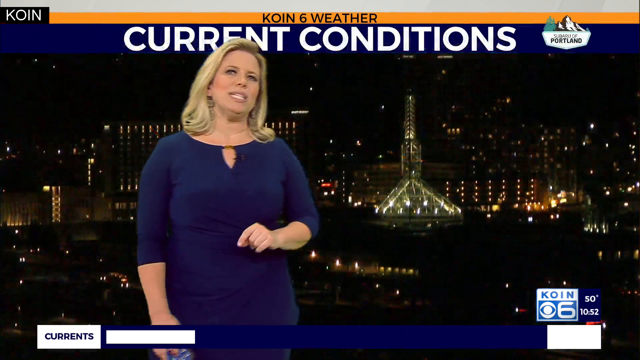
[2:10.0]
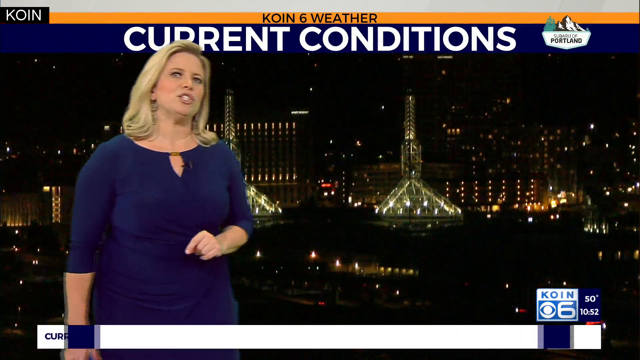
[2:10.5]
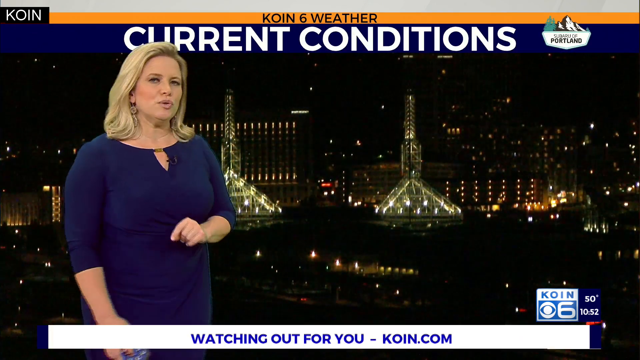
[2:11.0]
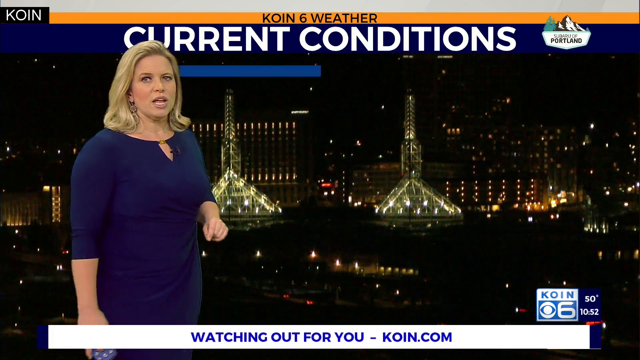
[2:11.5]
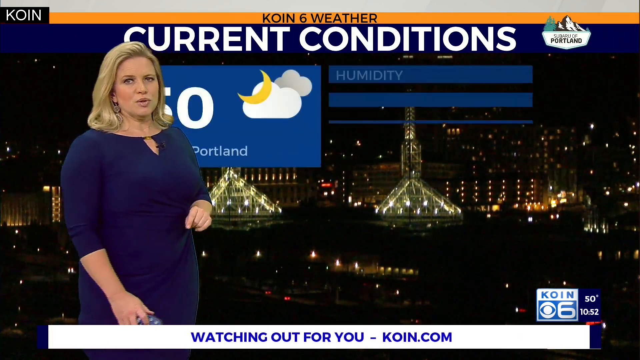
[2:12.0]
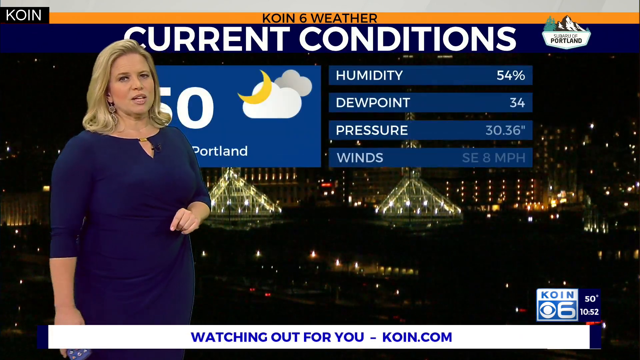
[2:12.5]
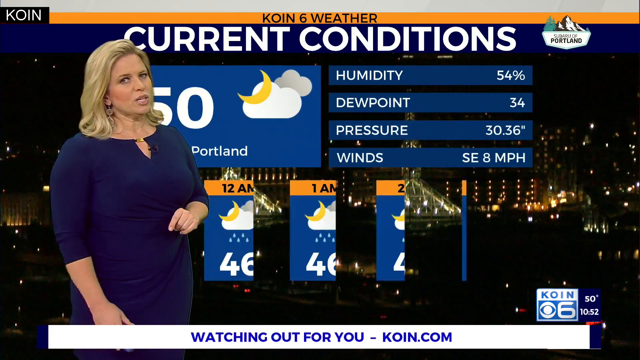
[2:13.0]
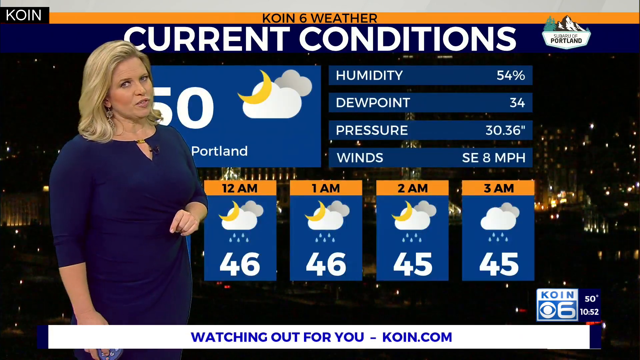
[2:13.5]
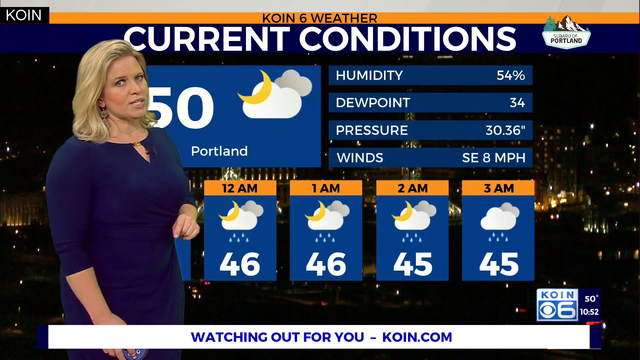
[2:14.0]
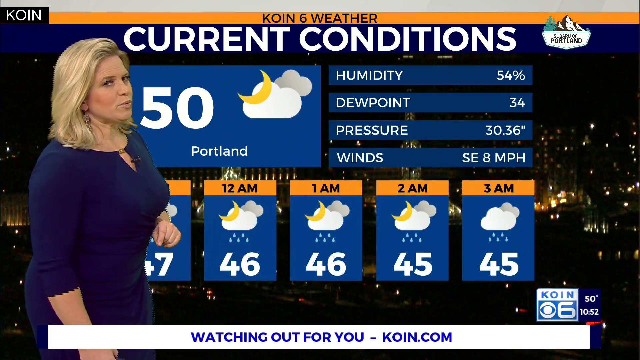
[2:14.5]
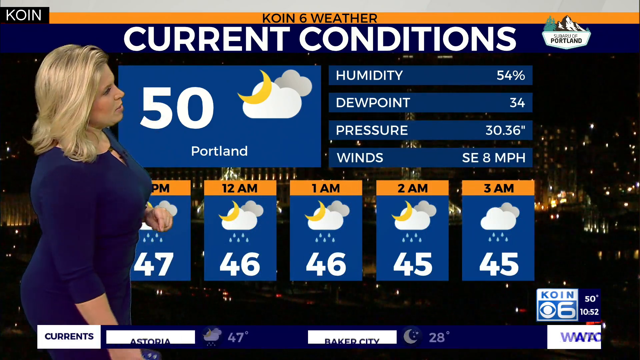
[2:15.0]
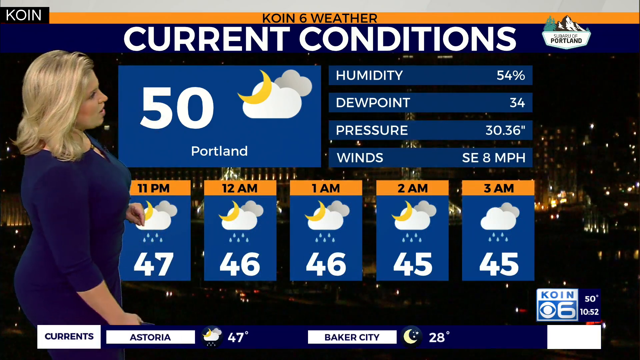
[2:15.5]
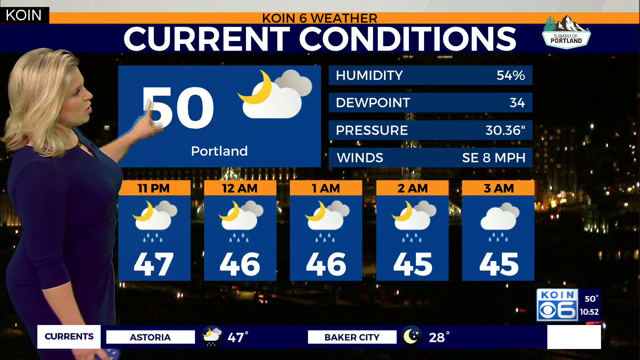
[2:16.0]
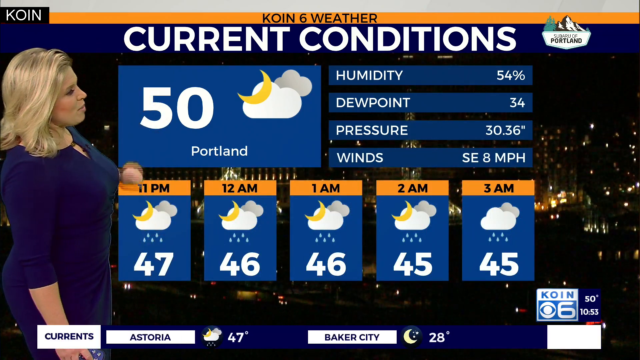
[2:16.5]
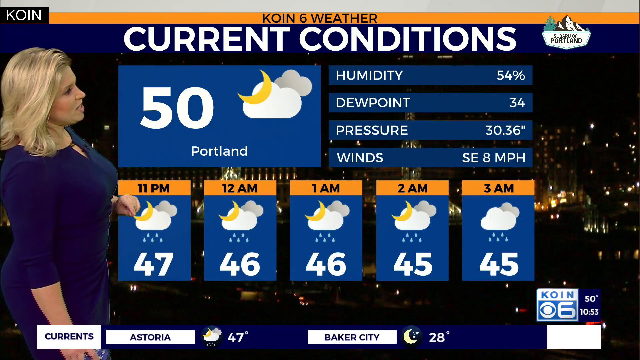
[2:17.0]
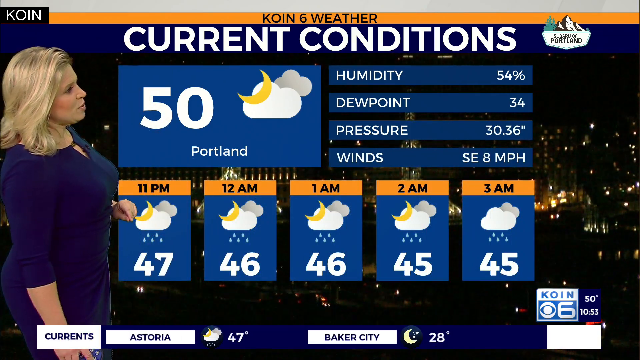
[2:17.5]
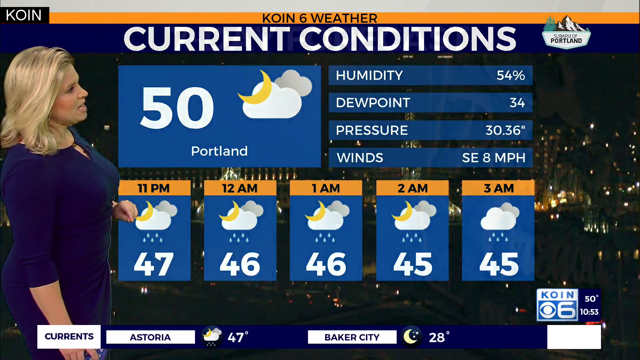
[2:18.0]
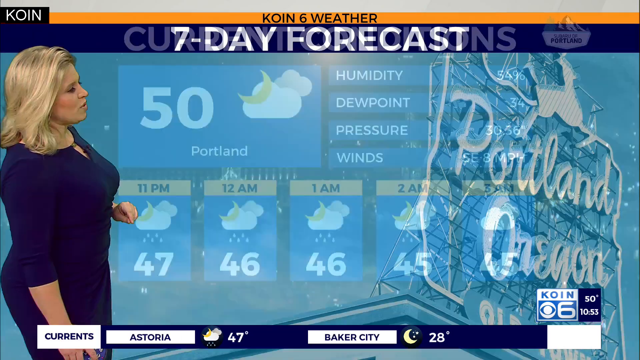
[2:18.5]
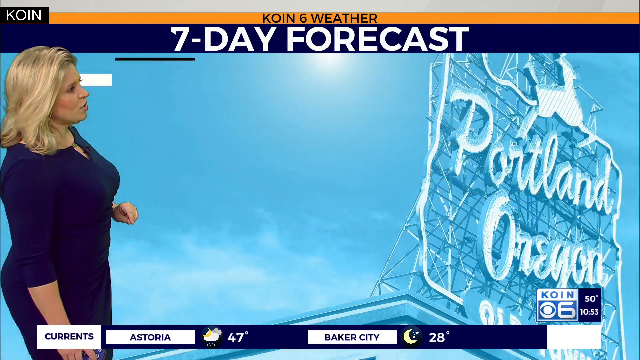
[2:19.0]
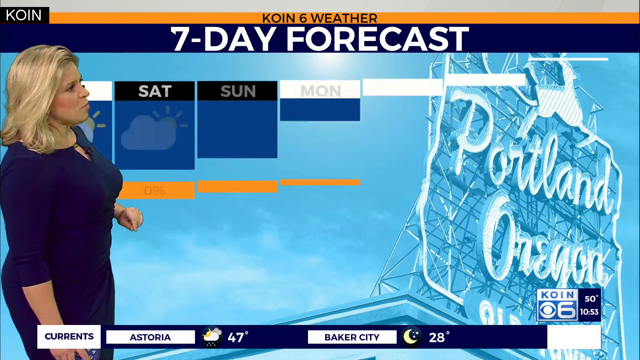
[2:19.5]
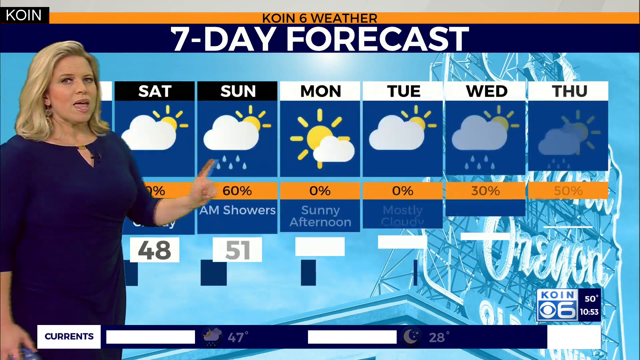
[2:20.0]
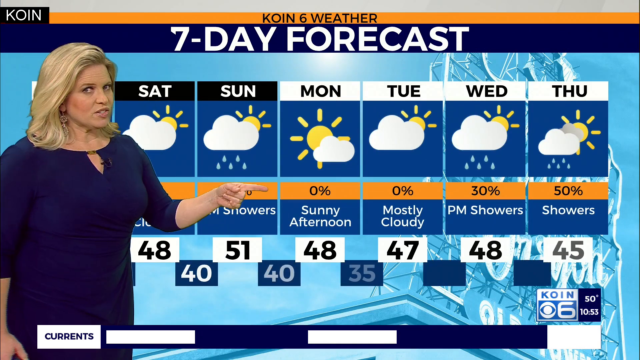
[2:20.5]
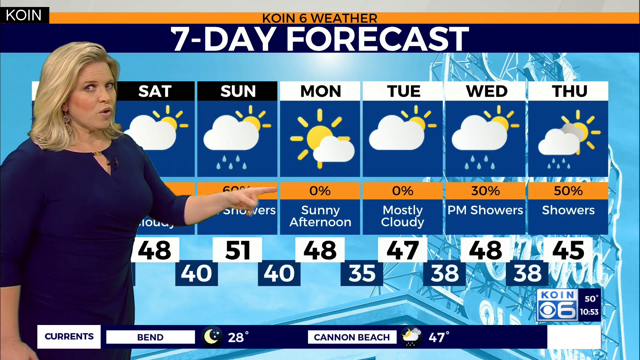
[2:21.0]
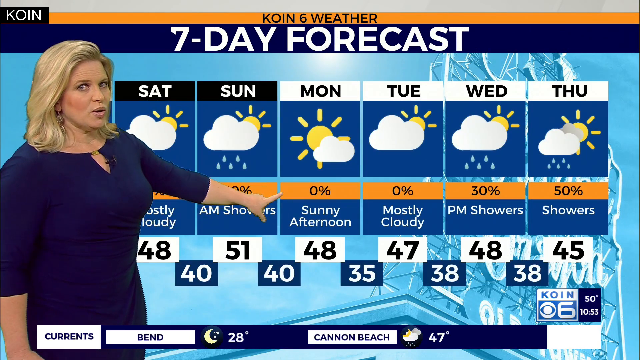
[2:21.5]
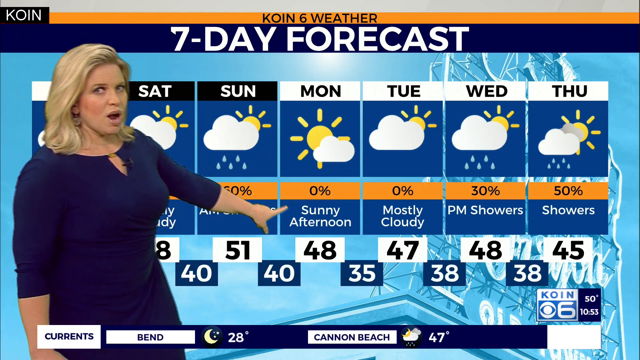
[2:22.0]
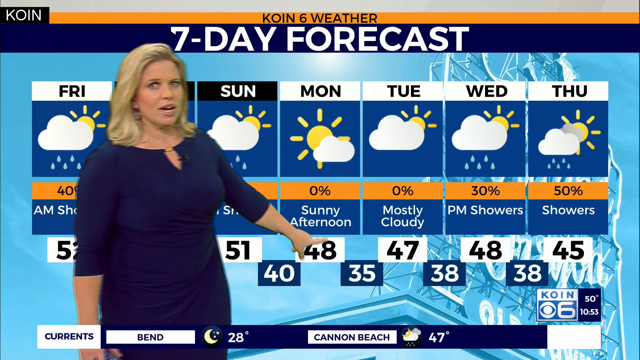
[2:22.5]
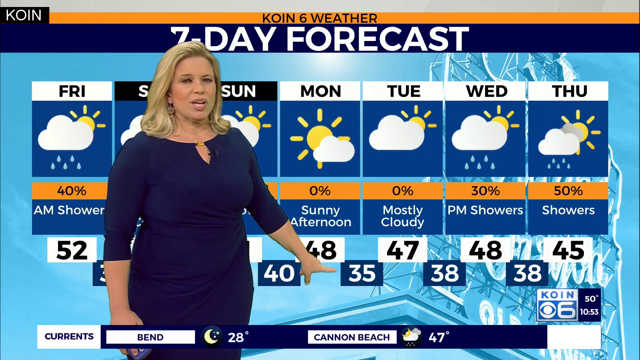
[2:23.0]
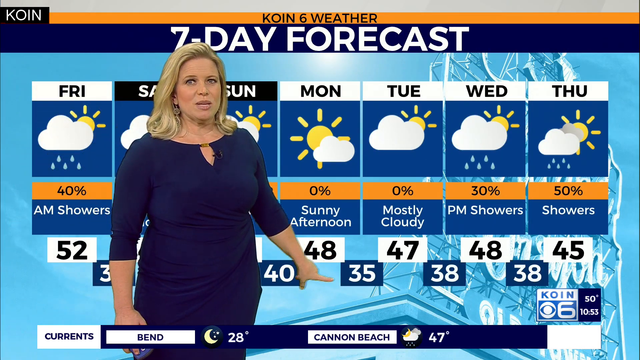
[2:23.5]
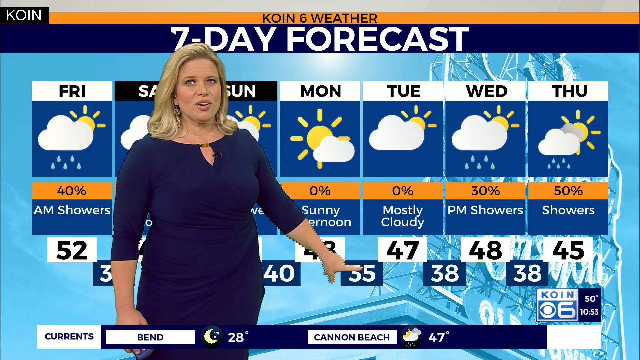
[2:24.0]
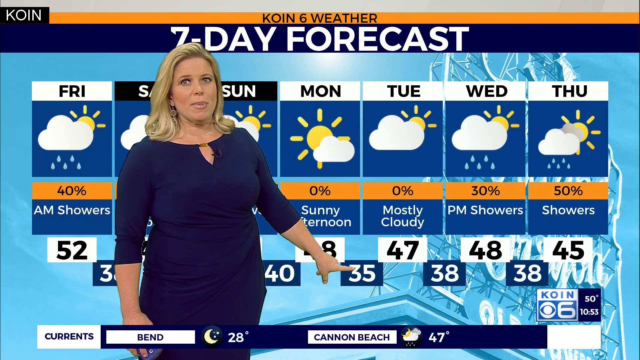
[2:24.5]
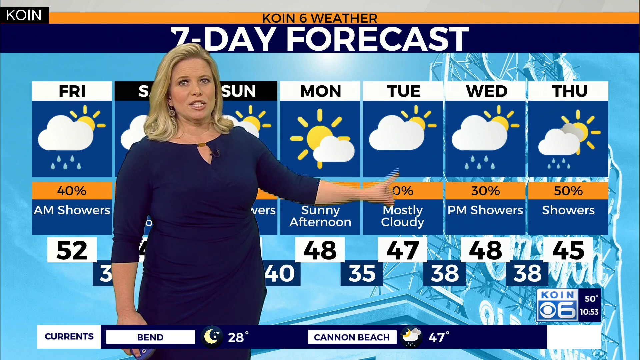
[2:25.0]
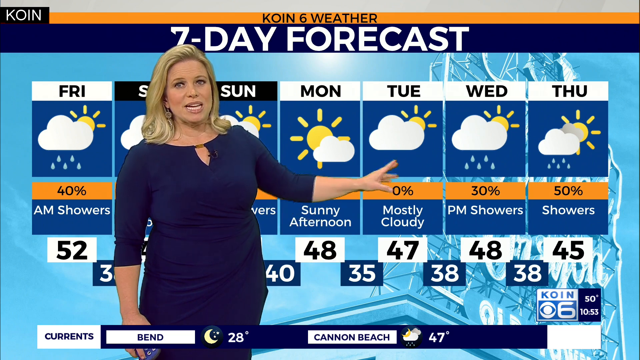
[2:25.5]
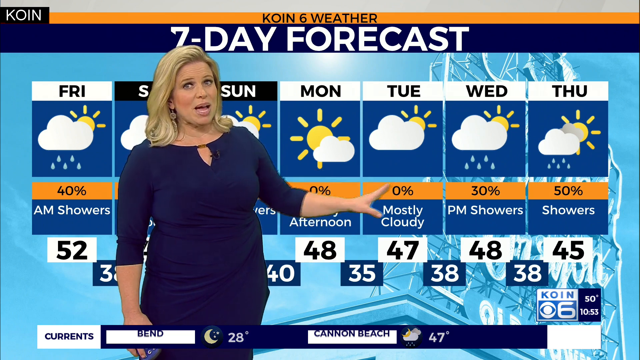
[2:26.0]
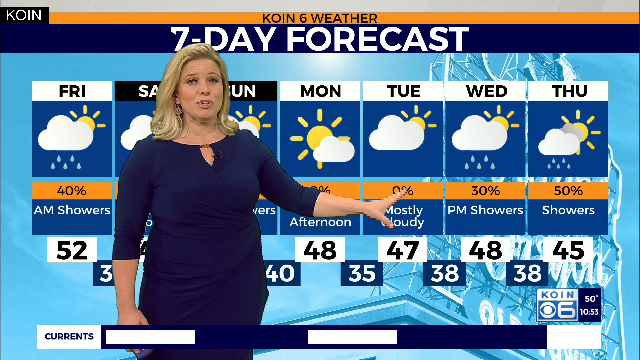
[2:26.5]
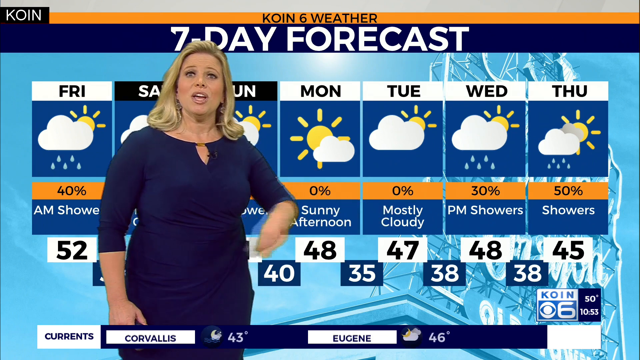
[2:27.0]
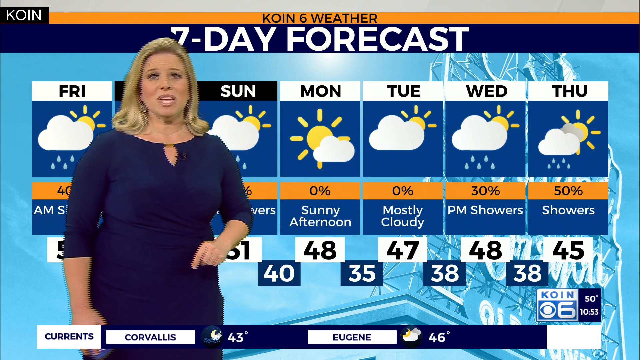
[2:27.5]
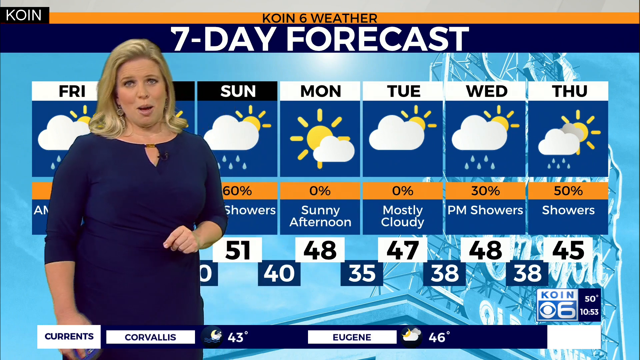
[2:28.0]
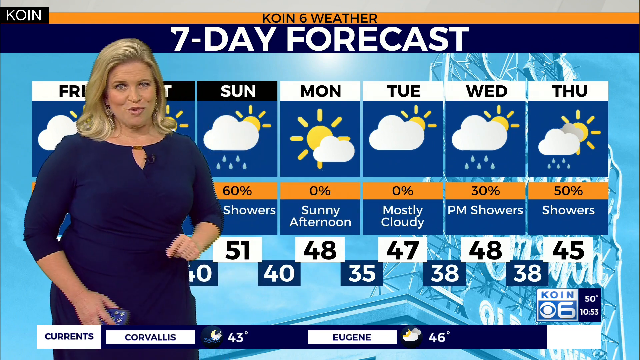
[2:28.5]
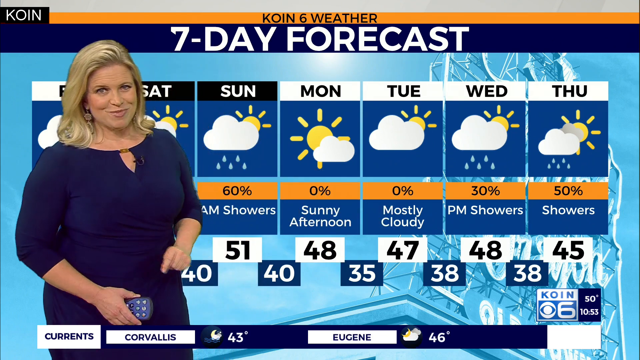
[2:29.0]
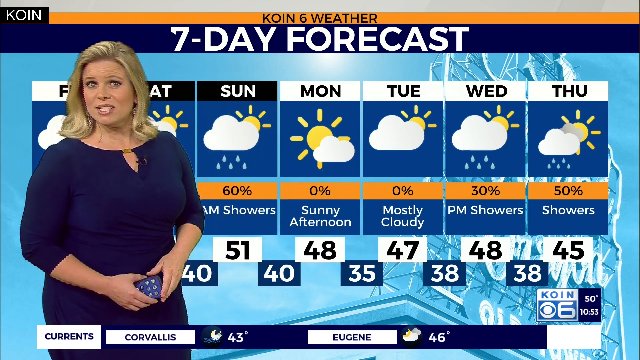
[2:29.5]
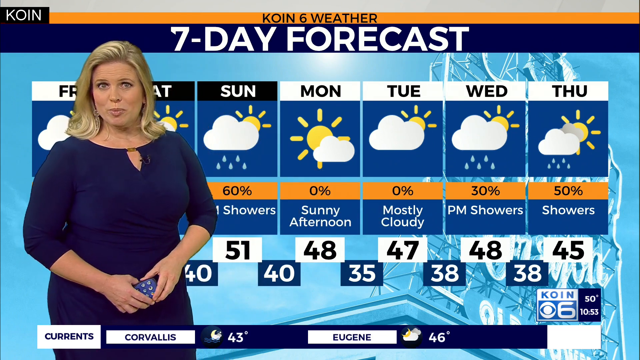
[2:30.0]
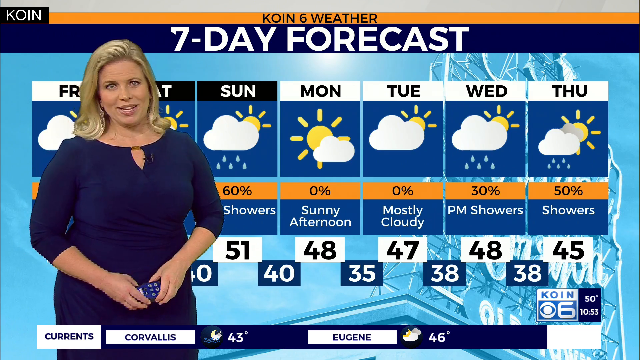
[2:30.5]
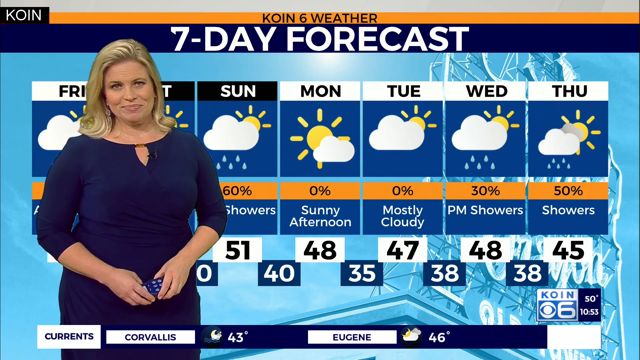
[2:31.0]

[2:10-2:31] She moves to a night scene showing 50 degrees in Portland, humidity 54%, dew point 34 and pressure 30.36, followed by nighttime and early-morning temperatures: 11pm 47 degrees, 12am 46 degrees, 1am 46 degrees, 2am 45 degrees and 3am 45 degrees, as she closes out the segment.